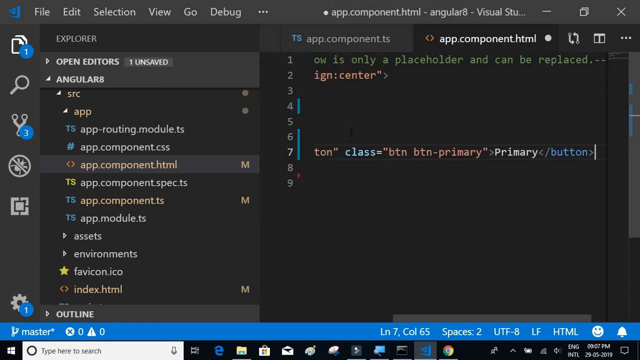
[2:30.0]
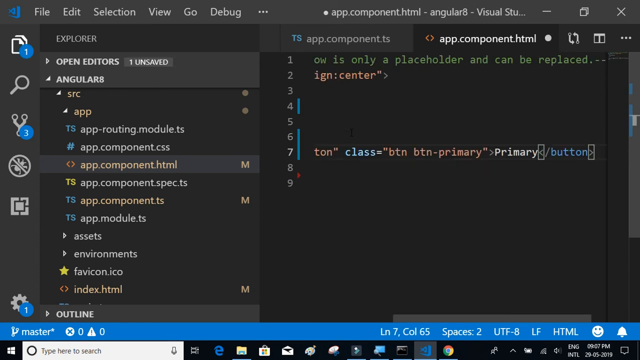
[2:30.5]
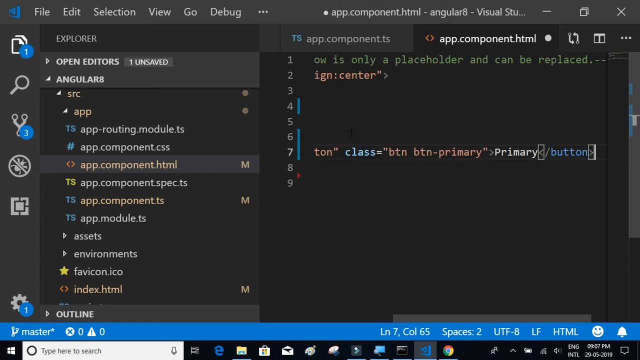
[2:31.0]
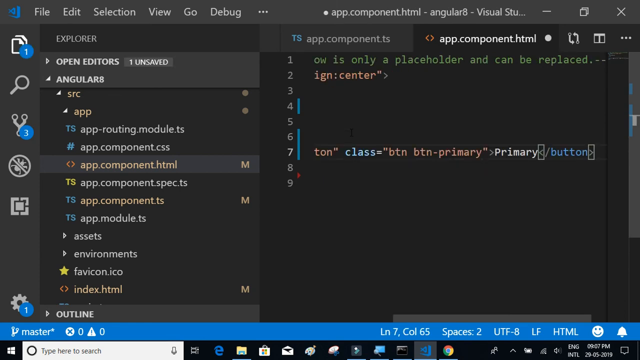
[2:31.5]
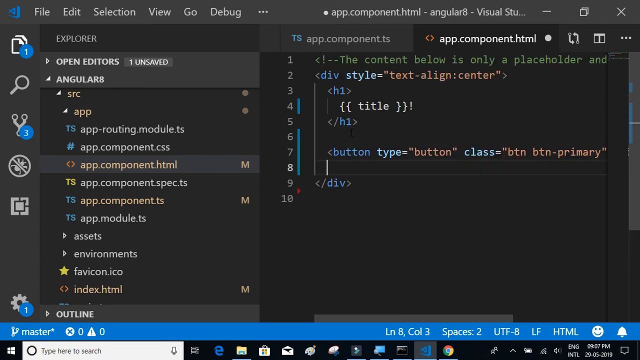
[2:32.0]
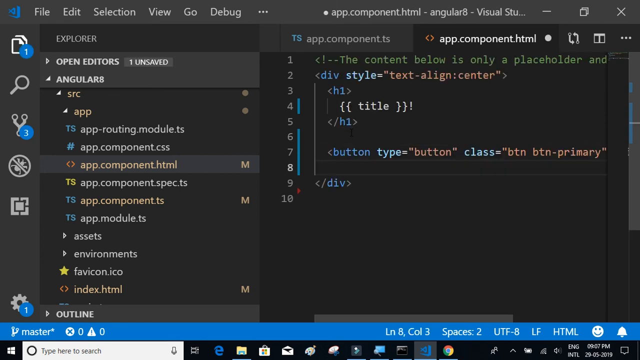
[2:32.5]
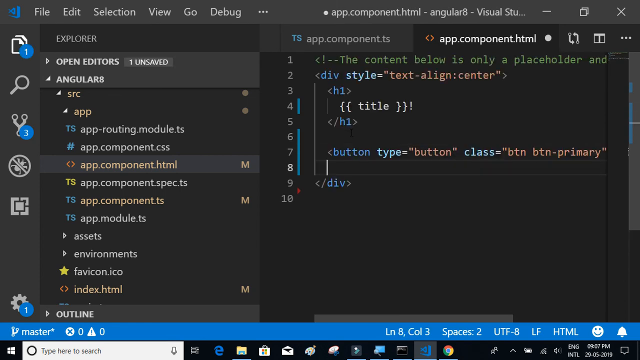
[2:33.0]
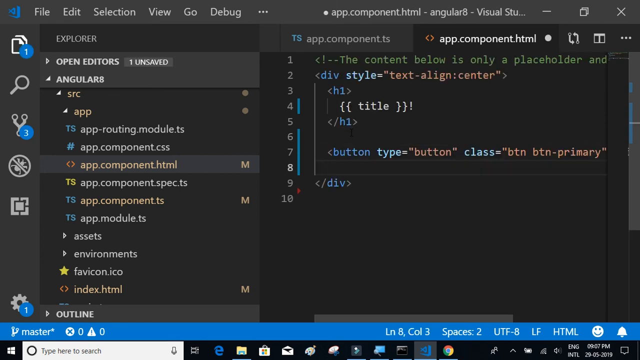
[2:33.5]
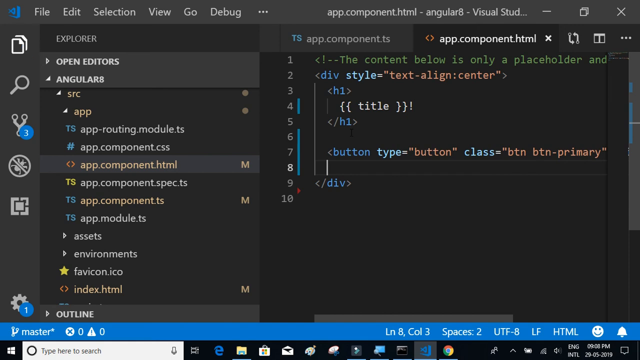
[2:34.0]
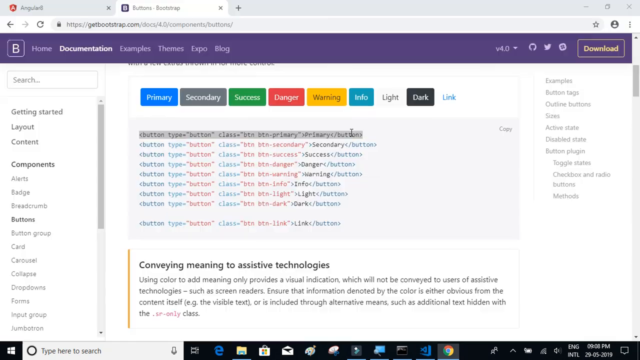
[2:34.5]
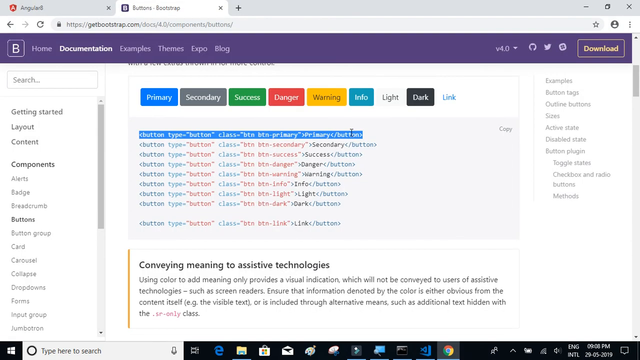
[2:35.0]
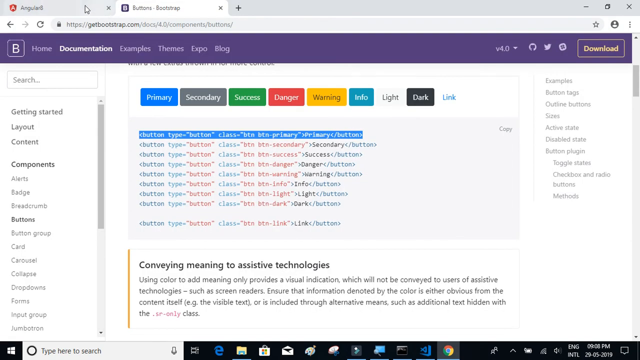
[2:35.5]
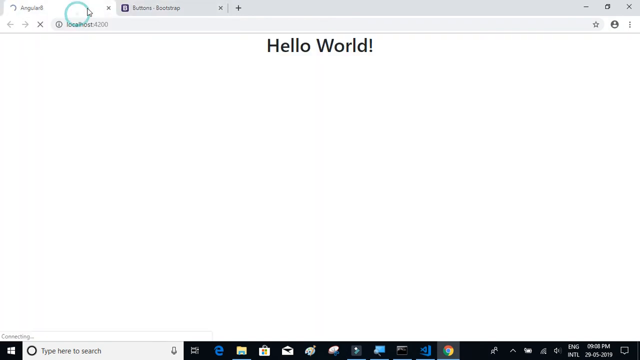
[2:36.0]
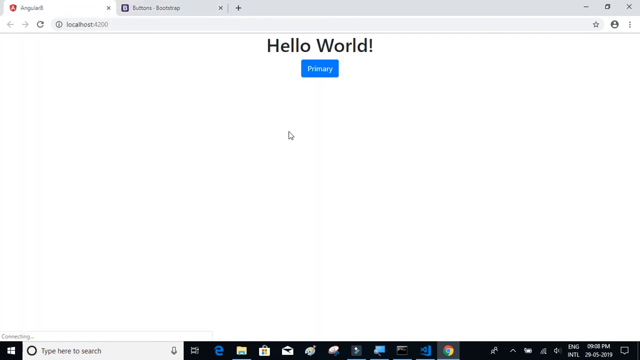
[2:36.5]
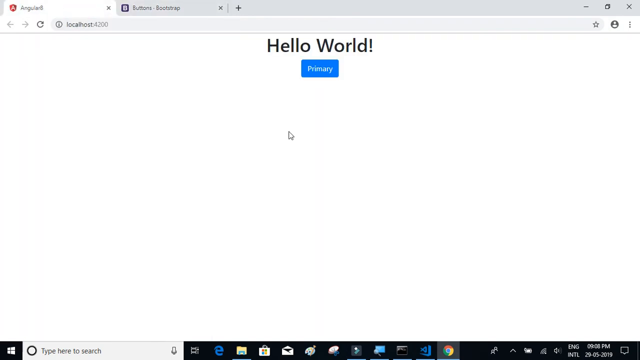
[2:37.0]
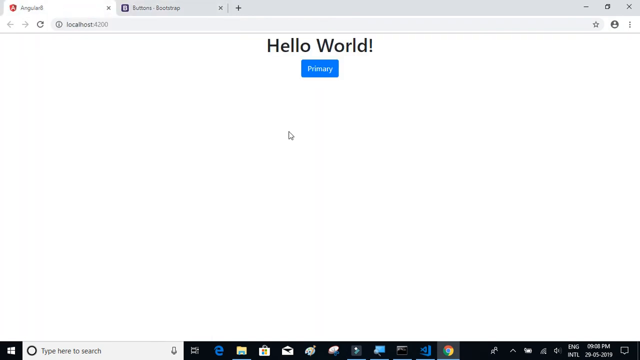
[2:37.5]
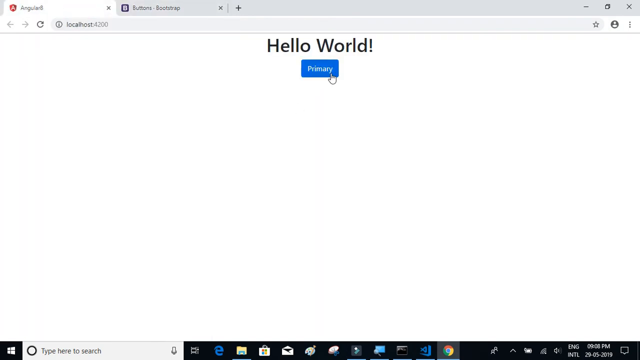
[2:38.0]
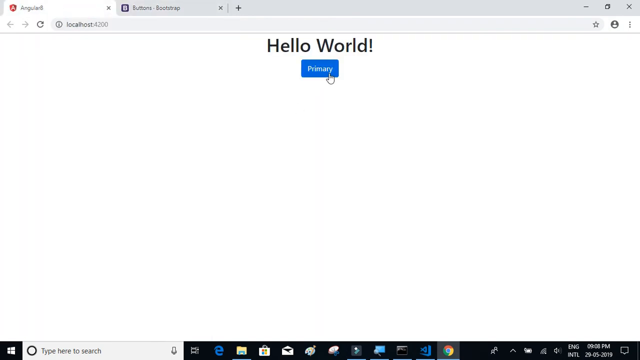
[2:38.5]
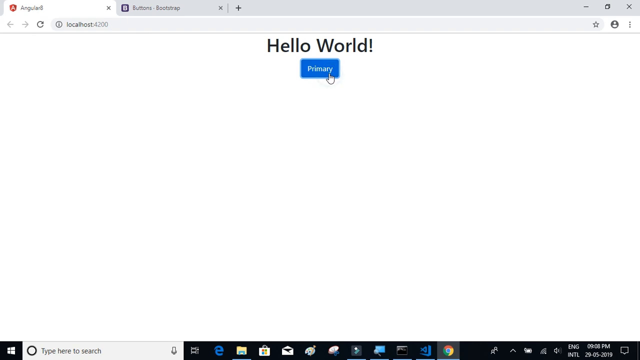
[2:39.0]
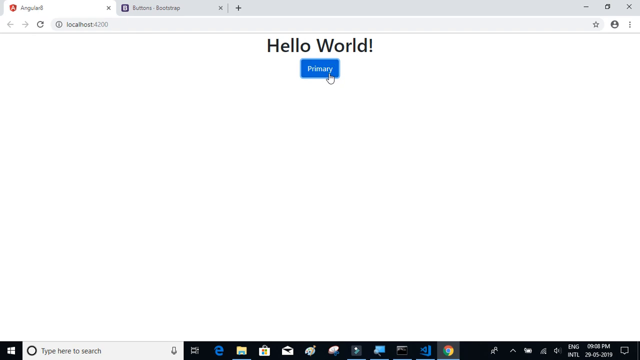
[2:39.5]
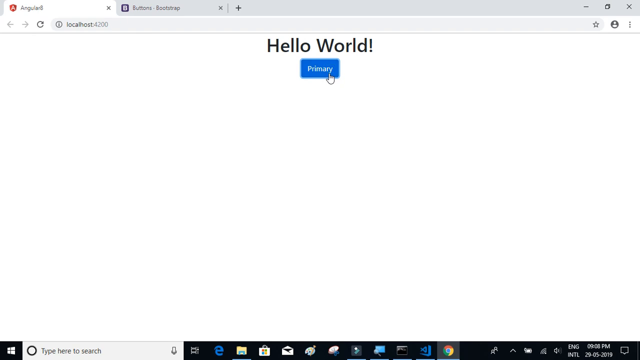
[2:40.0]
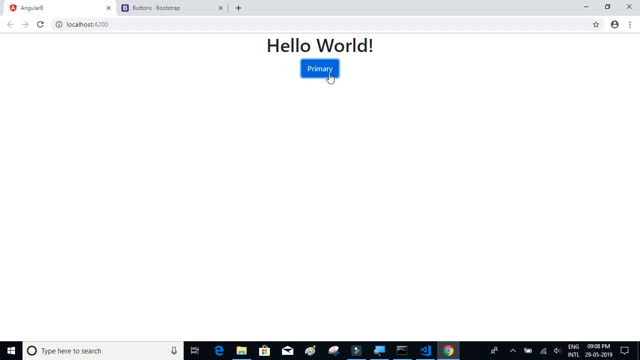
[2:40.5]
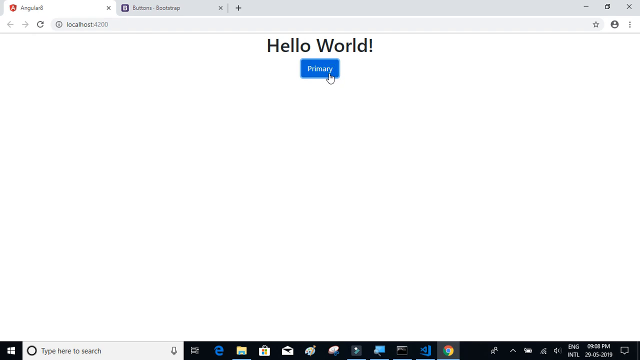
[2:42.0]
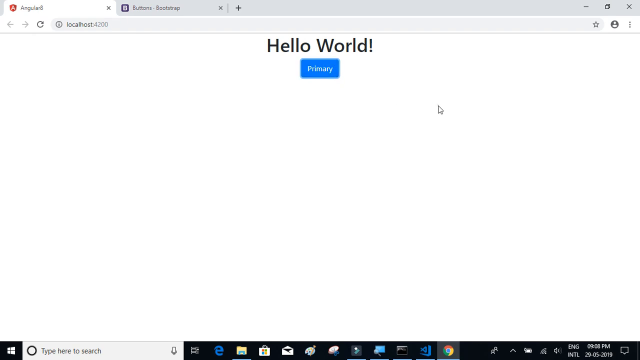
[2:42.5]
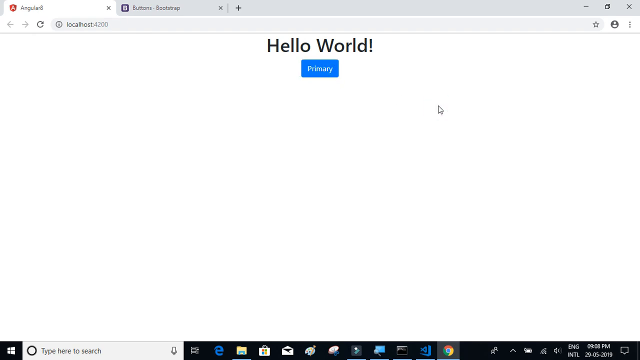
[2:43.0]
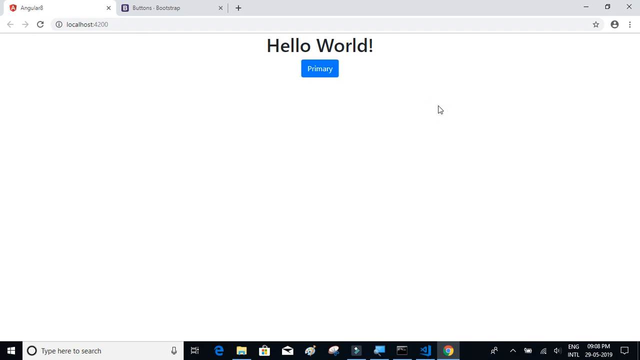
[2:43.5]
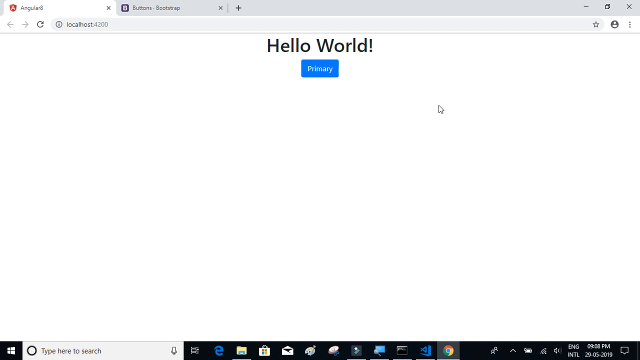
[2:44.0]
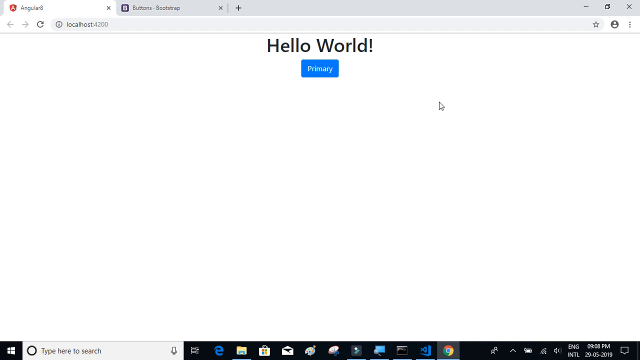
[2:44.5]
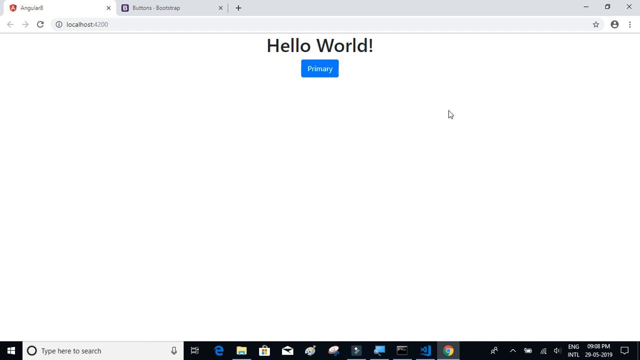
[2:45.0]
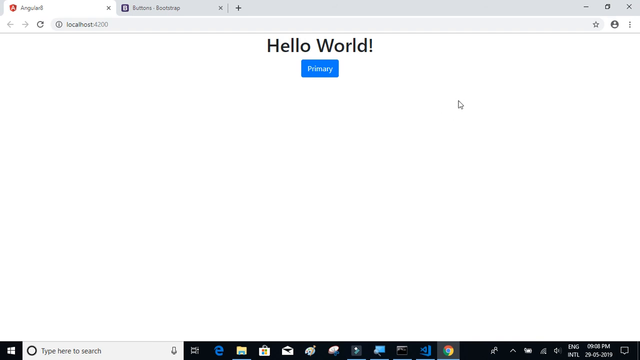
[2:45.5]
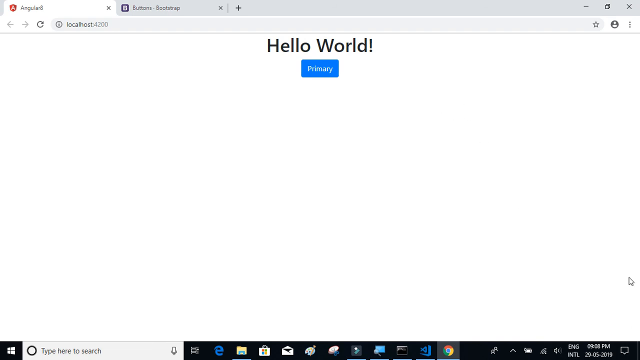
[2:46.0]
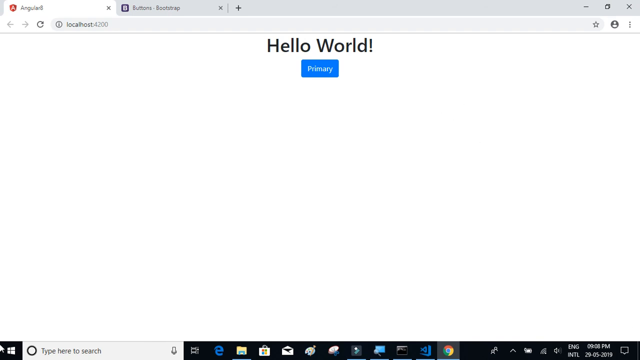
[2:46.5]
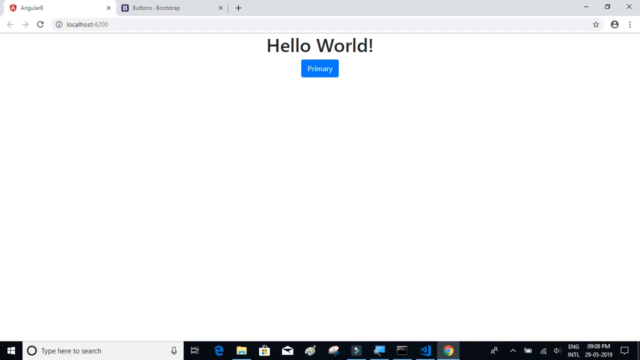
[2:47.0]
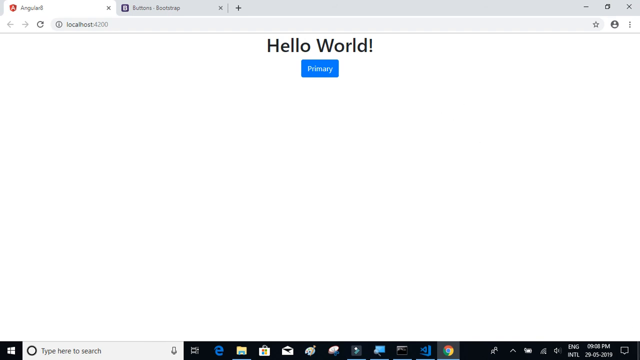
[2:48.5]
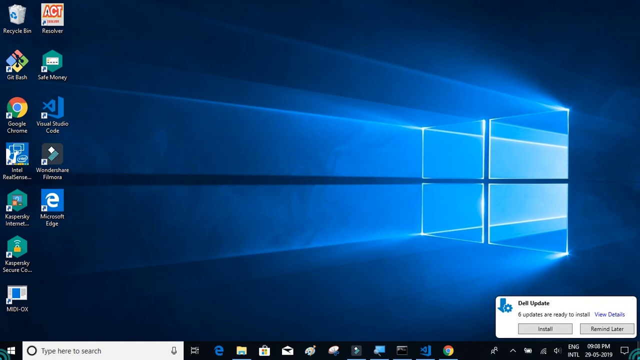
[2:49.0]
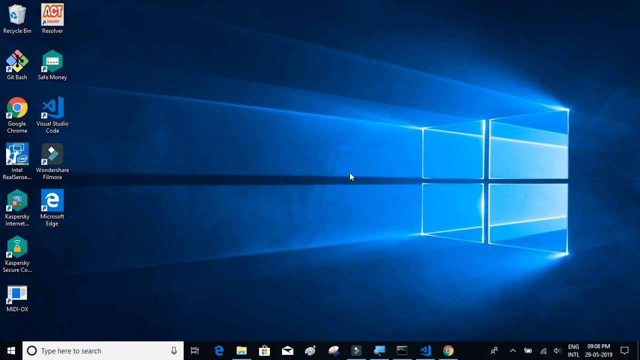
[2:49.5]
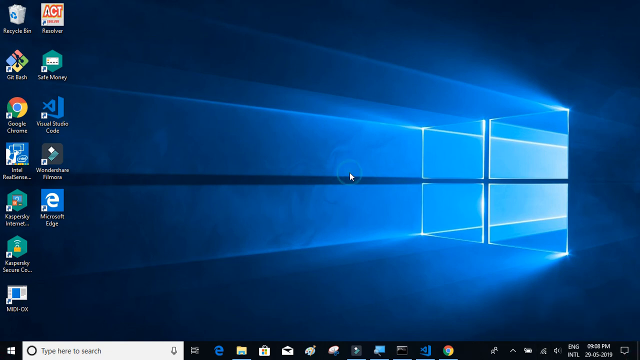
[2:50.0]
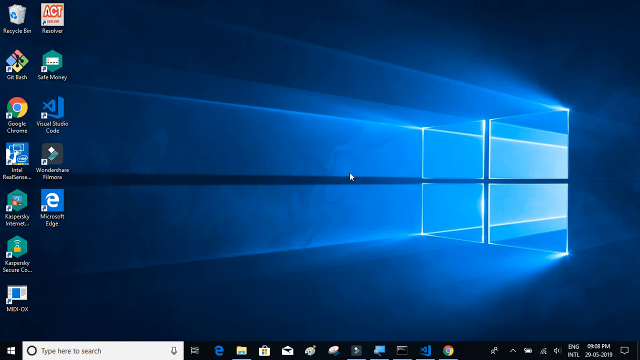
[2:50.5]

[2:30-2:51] The user goes back and forth between two open tabs, typing on the right with a menu on the left and moving very fast. The program shows "Hello World" with a blue box underneath that says "Primary". The tabs say "Angulars" on the left and "Buttons Bootstrap" on the right. The cursor moves, and then the whole page is minimized, revealing the Windows desktop, with windows on the right that have light shining through them and various apps, including Google Chrome, on the left.